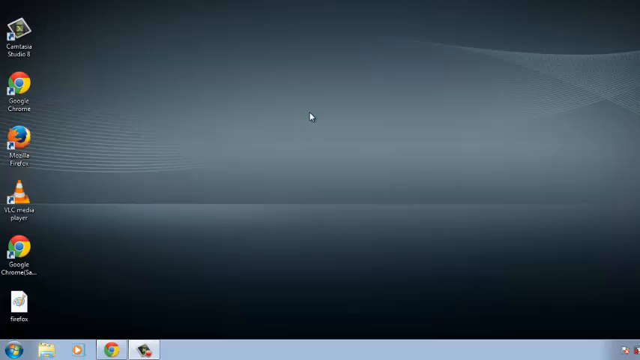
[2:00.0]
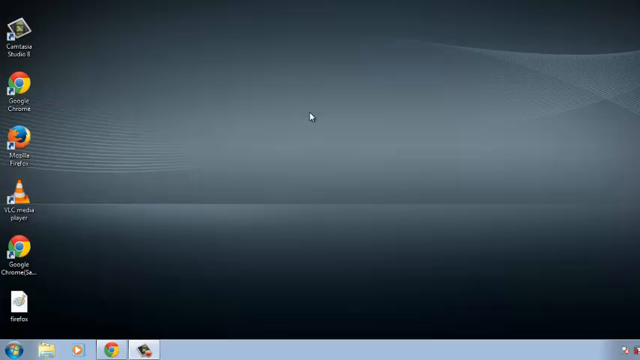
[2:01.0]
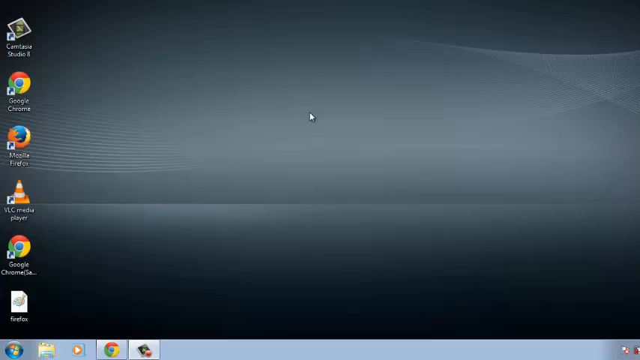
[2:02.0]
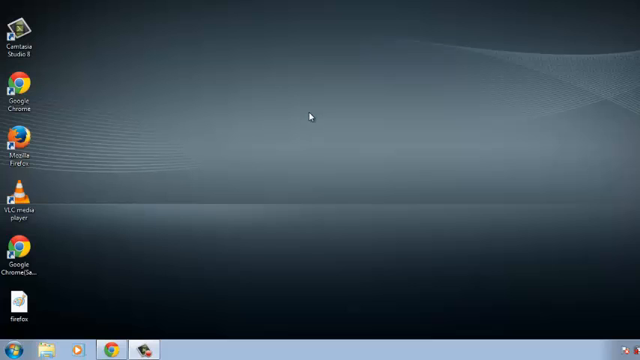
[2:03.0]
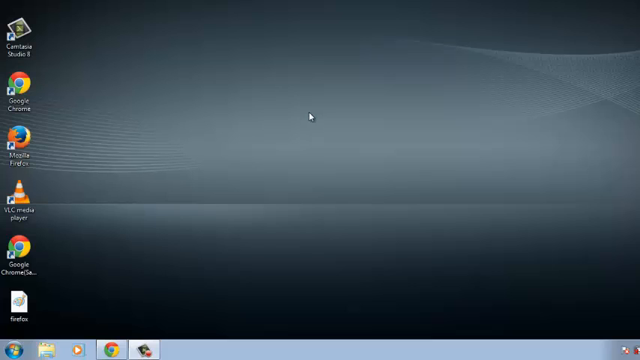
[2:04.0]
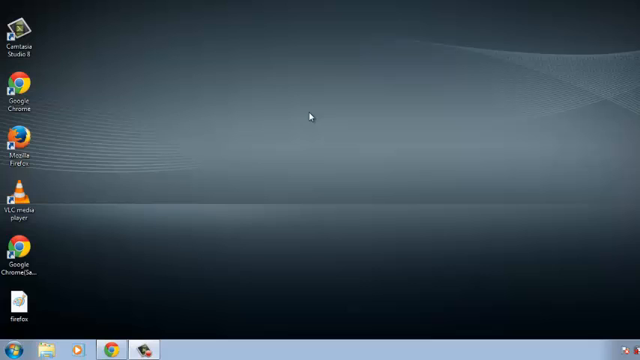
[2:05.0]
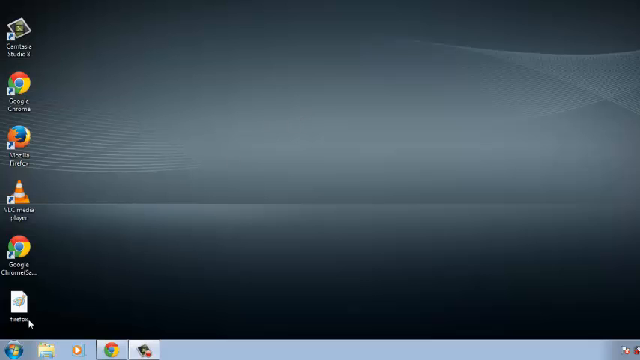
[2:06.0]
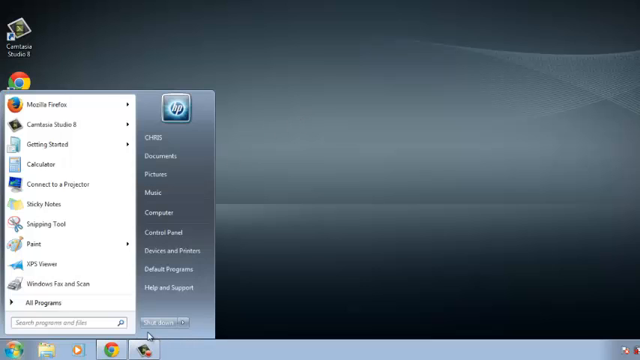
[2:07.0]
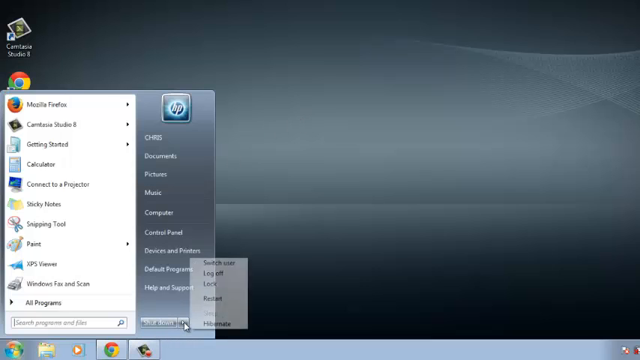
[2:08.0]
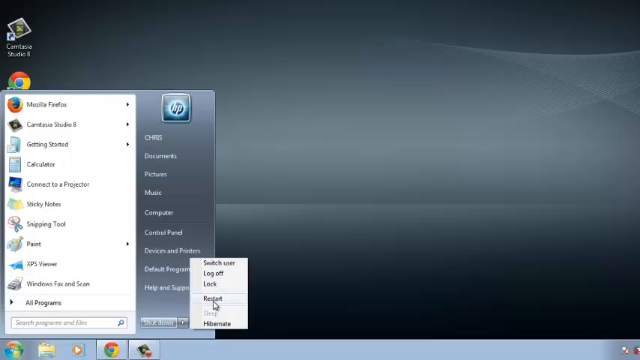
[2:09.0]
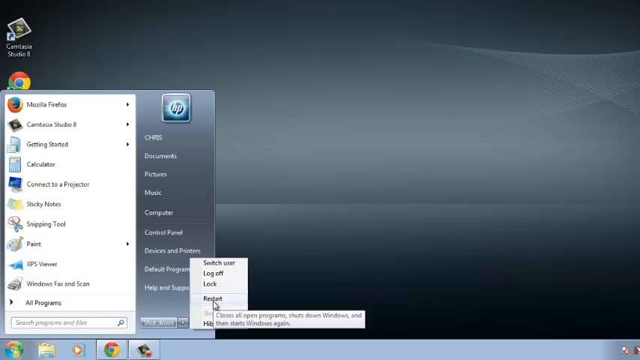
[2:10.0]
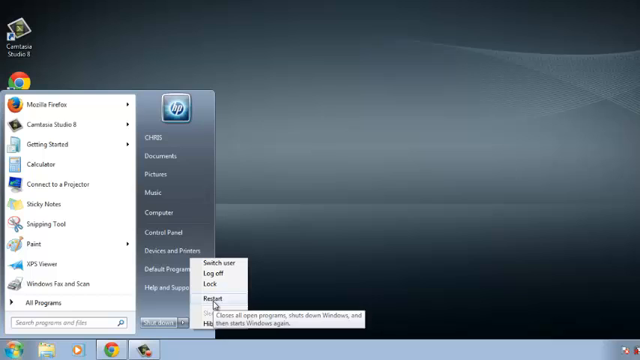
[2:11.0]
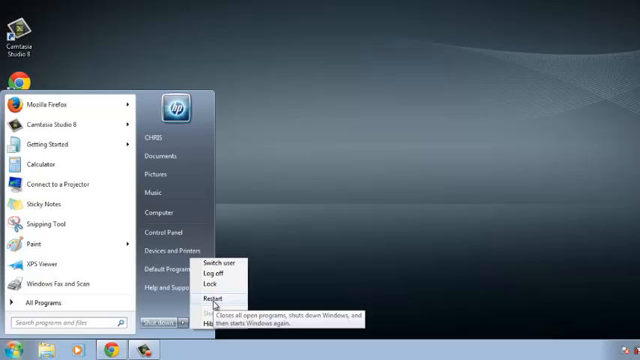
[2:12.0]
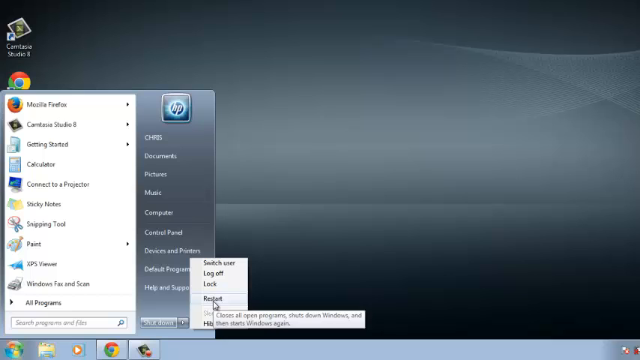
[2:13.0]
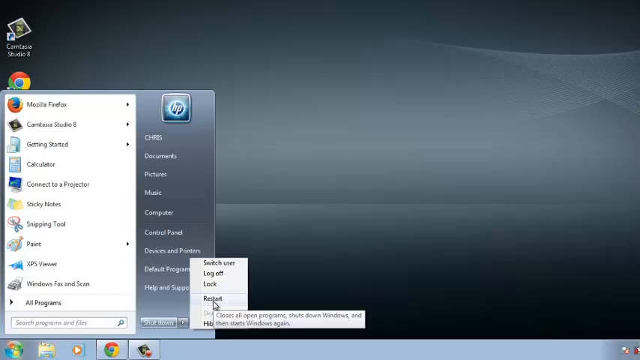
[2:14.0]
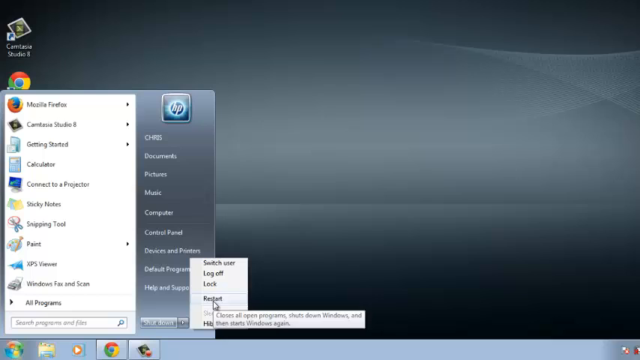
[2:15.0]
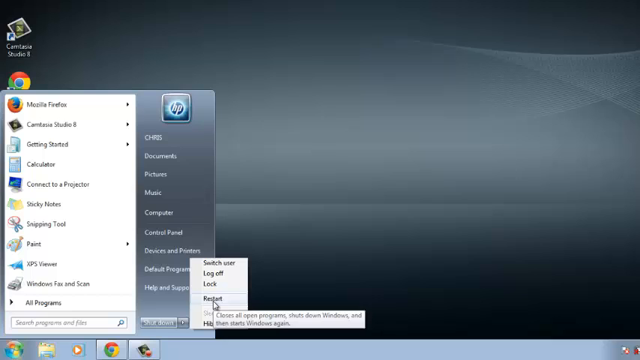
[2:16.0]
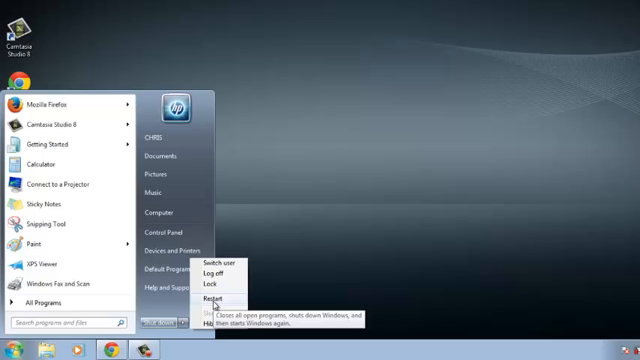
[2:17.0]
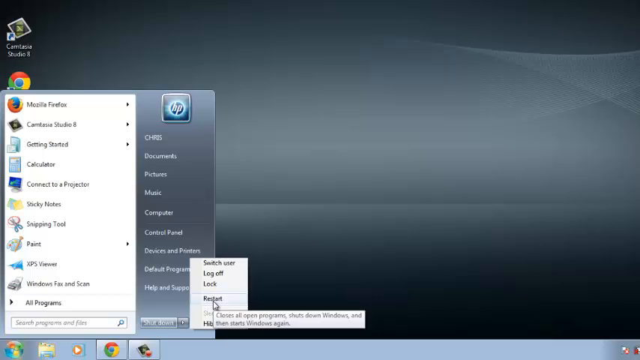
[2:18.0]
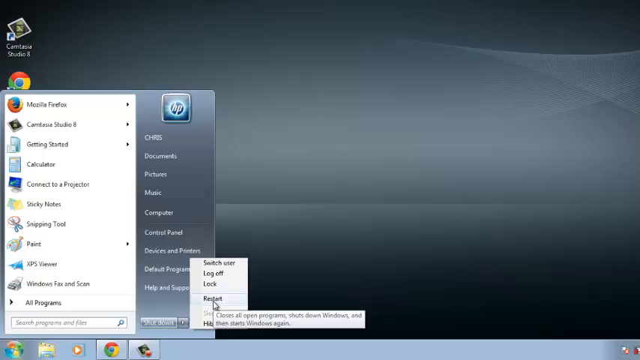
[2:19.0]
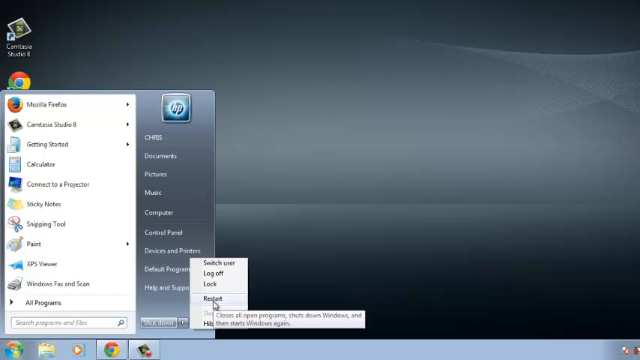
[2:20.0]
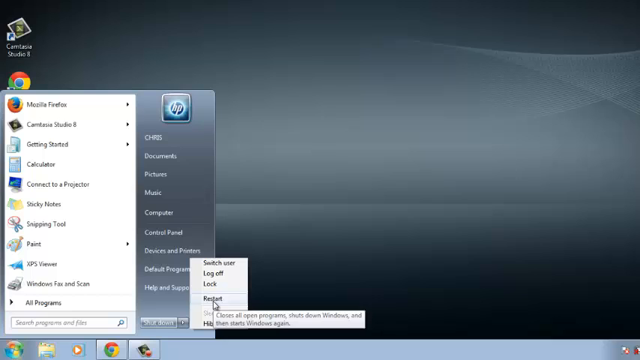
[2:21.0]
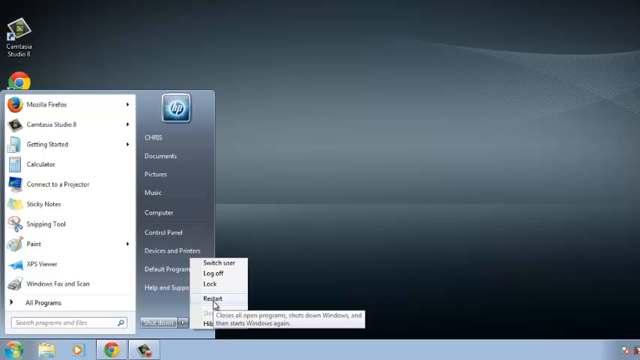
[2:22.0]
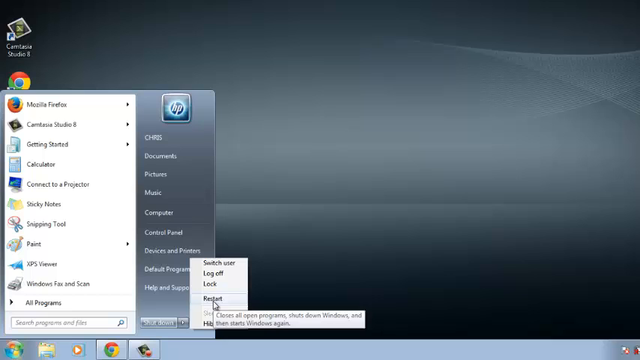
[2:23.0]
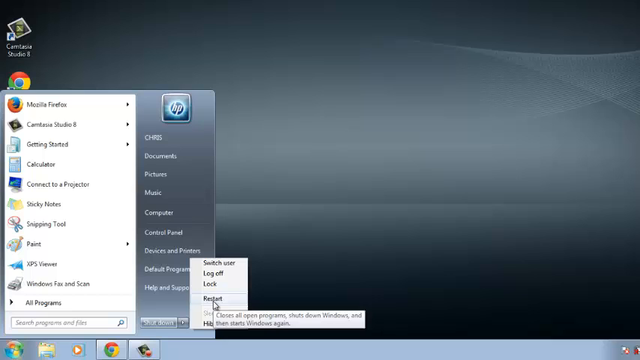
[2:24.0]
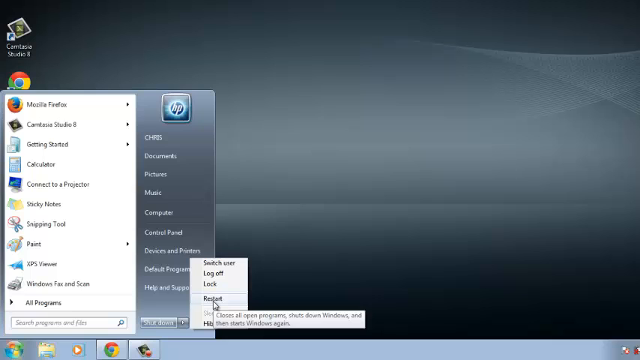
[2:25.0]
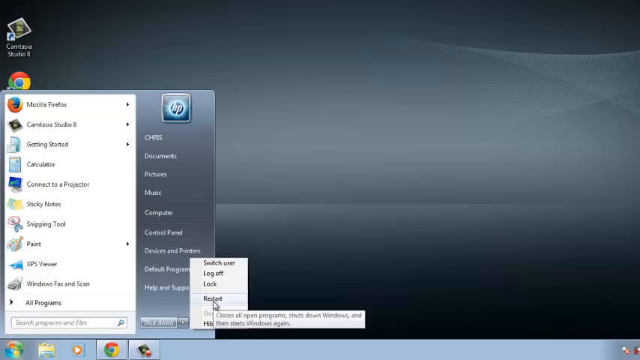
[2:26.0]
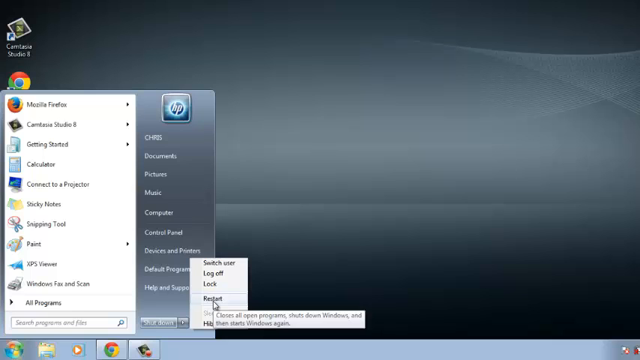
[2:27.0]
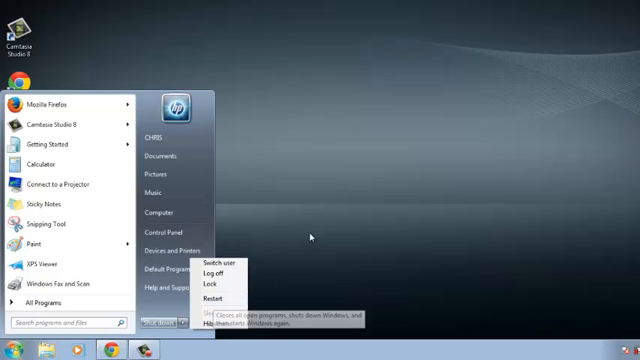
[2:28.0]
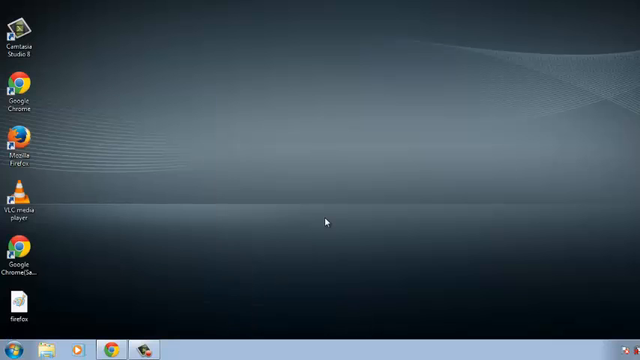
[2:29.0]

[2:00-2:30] The desktop of an old Windows version is shown, with a single row of applications on the left of the screen, including Firefox, Windows, a cone icon and a recording icon. The old Windows panel runs along the bottom, and the background is a dark black and gray gradient with wave-like patterns. The mouse hovers around the middle of the screen, then moves to the bottom left and clicks the Windows icon, opening the old Windows menu. The user clicks a button at the bottom right that controls the system and hovers over the restart button, which shows a brief description saying that it closes all programs, shuts down Windows, and then starts Windows again. The mouse keeps hovering over this menu. He then clicks off it, and the Windows menu and all drop-down menus disappear, leaving just the desktop.